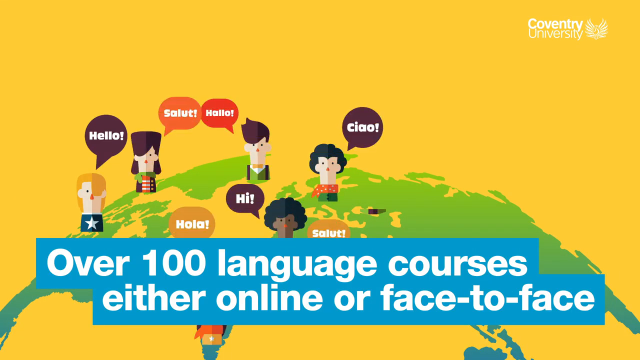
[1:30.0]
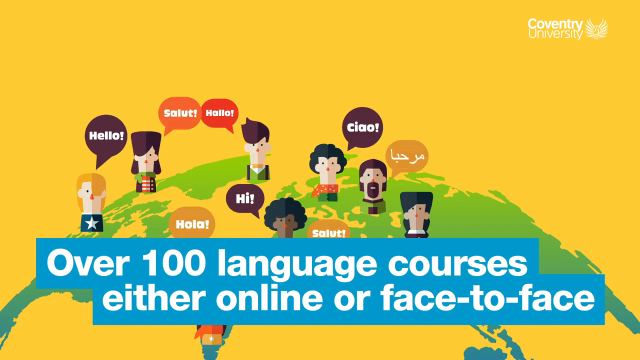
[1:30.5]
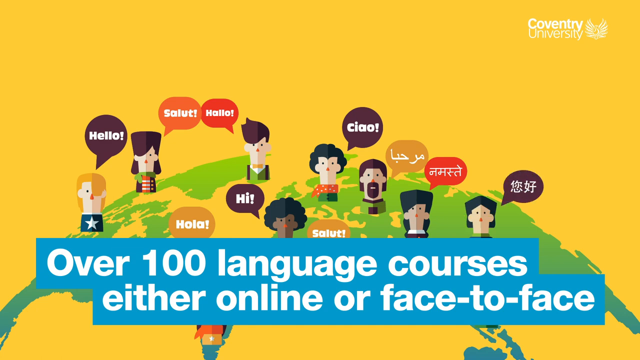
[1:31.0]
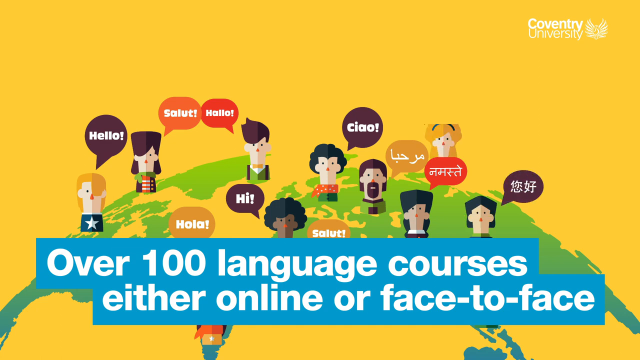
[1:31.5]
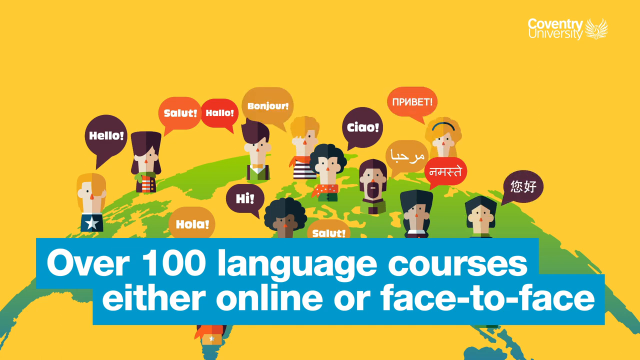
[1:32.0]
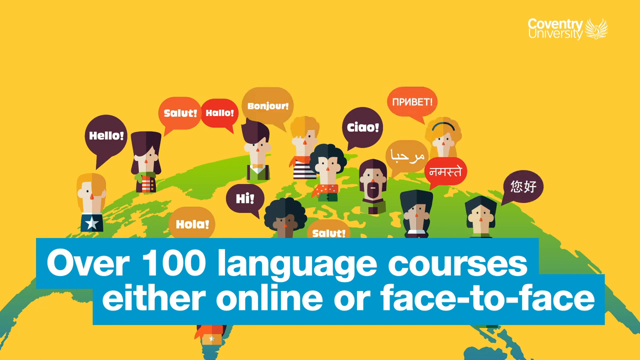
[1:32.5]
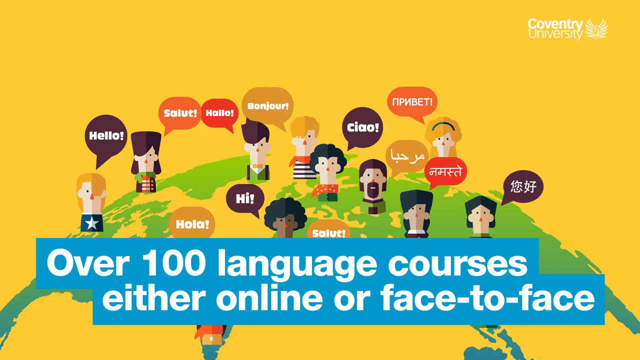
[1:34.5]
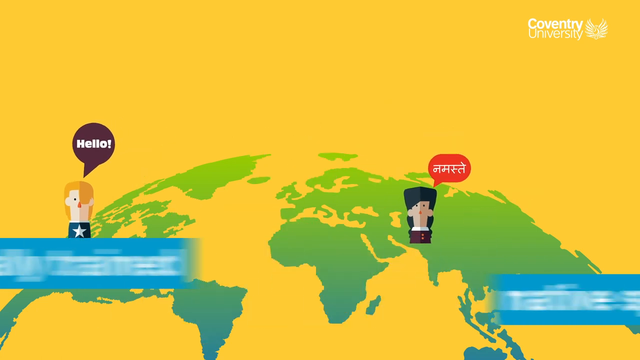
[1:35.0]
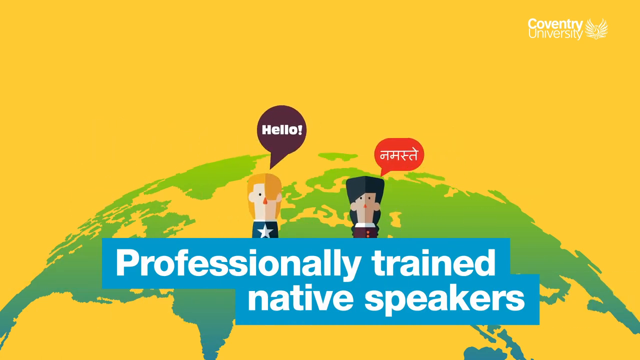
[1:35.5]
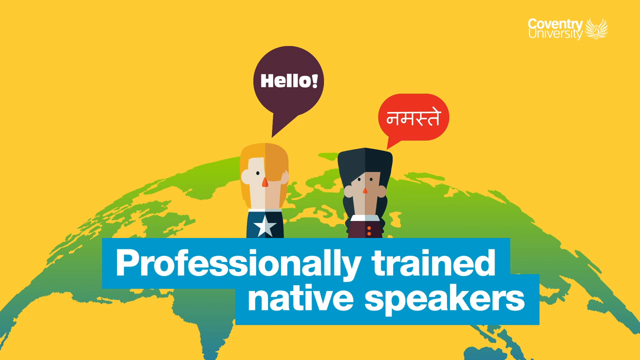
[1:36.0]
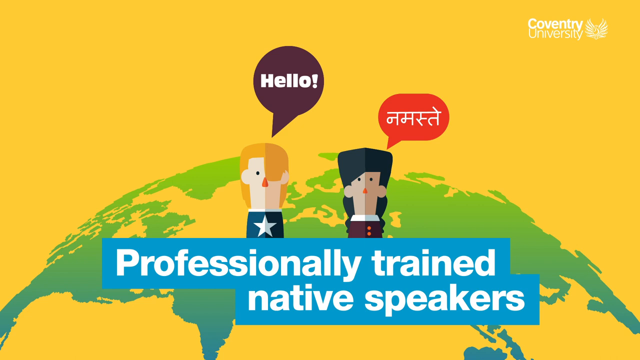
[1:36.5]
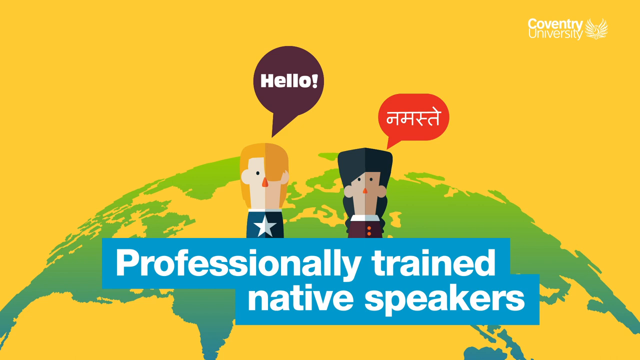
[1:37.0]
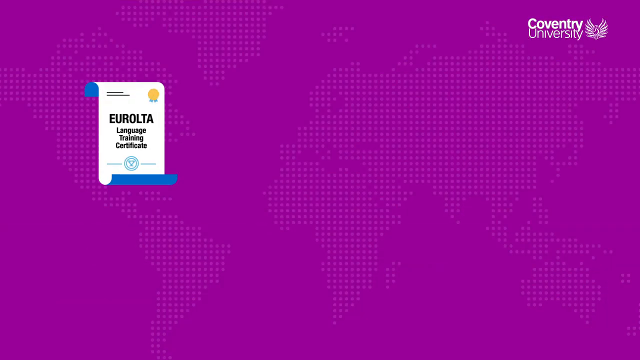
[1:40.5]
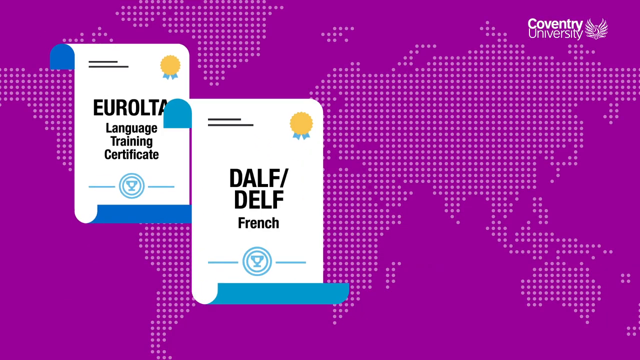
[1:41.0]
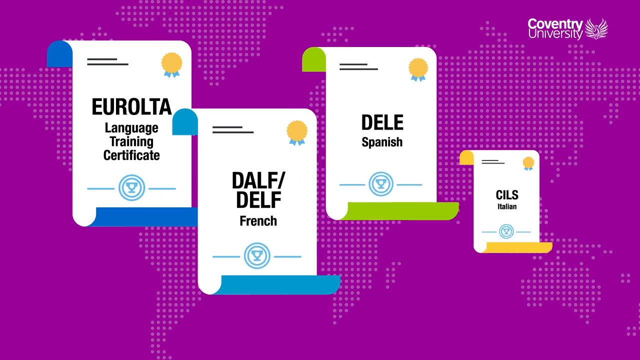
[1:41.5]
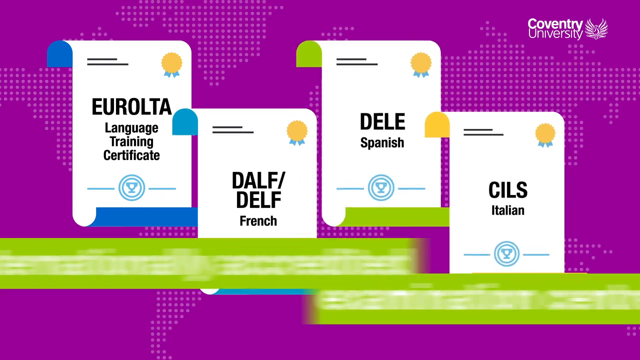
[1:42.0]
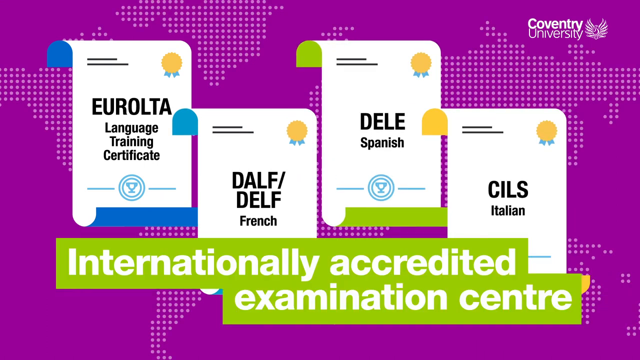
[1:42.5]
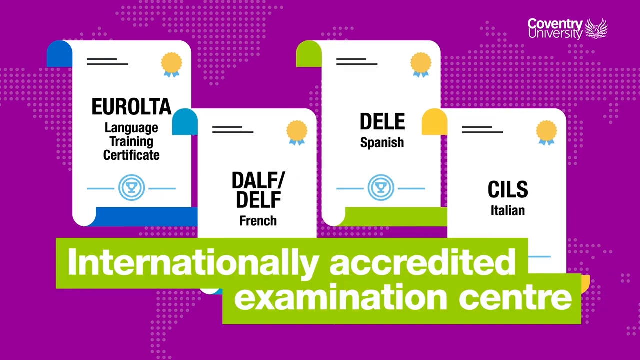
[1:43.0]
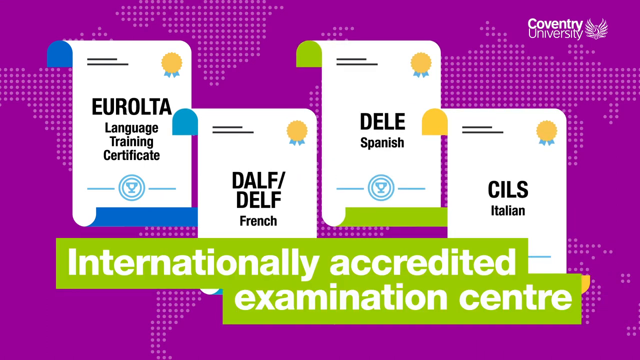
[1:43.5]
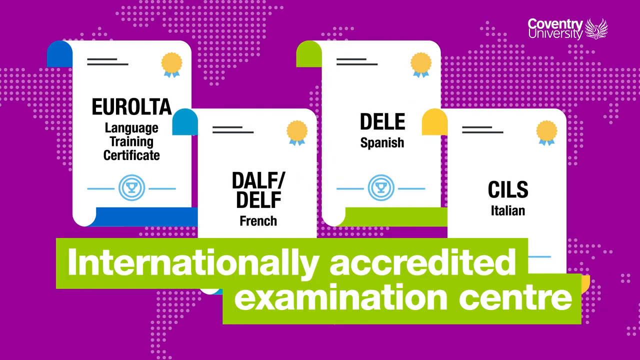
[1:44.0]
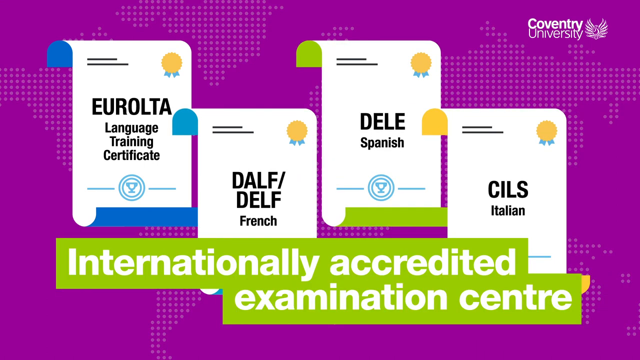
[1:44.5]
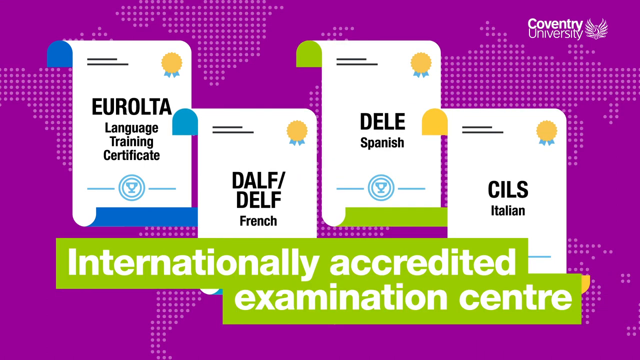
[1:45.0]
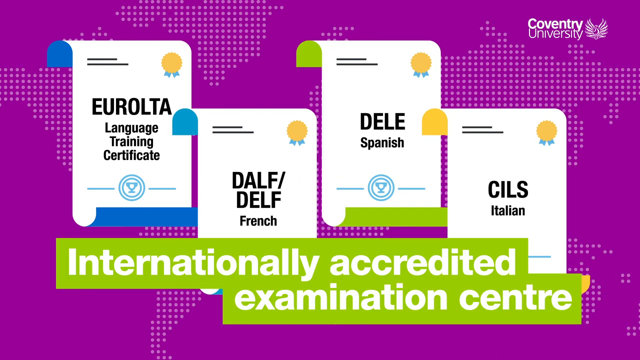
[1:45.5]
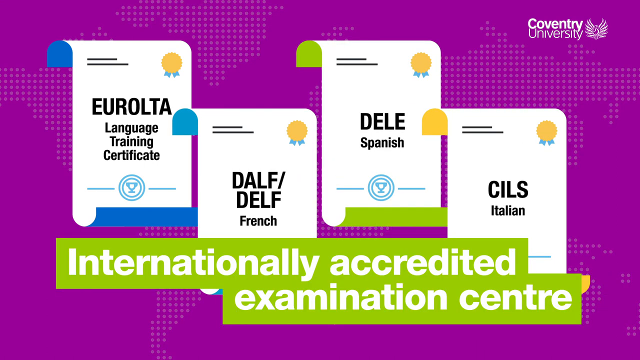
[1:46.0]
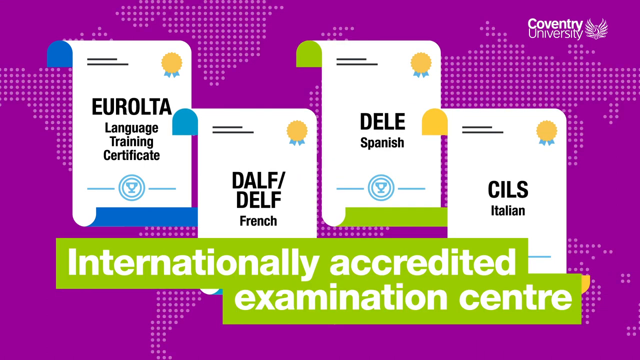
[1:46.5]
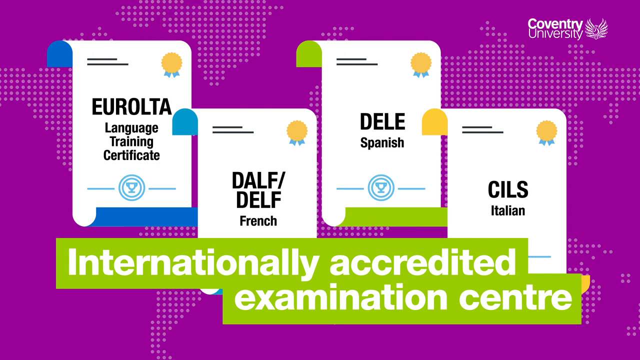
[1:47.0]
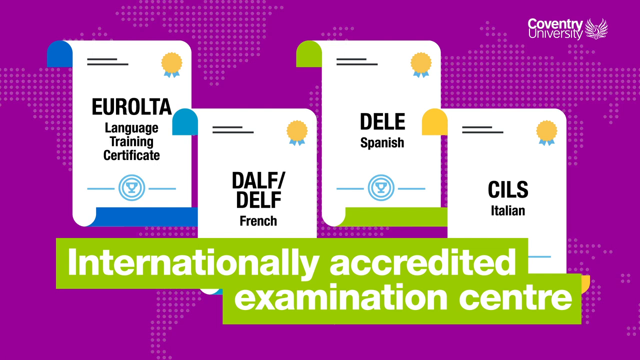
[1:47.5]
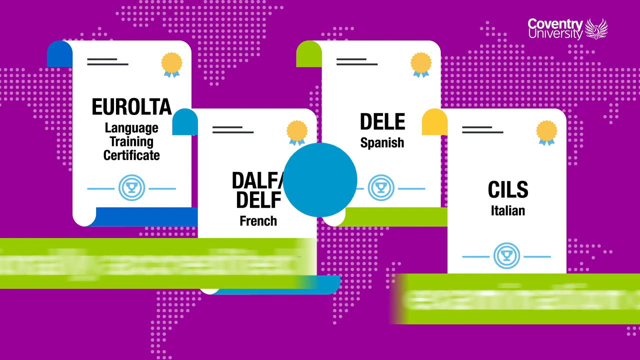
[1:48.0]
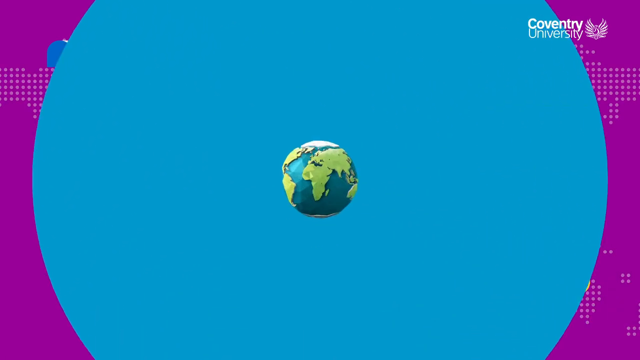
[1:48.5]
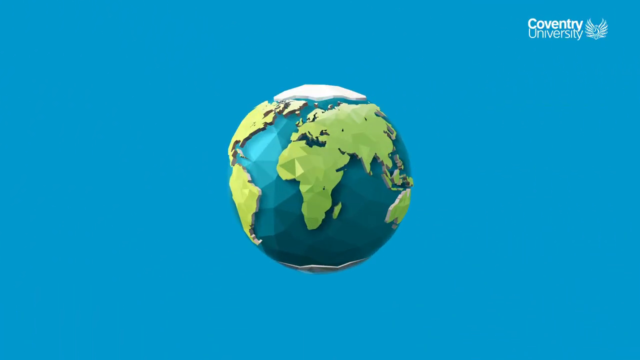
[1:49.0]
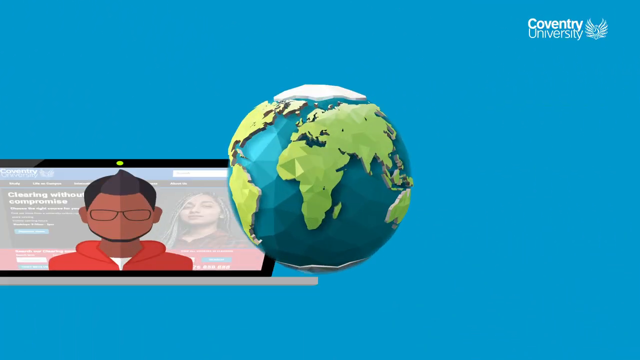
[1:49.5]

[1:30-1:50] A yellow screen shows, again, the globe, which is green, with multiple people standing on top of it, all saying hello in different languages. At the bottom of the screen, bold white lettering on a blue background reads "Over 100 language courses. Either online or face-to-face." The next page again shows the yellow screen with the green world and people standing on it, saying hello in two different languages; at the bottom, bold white lettering on a blue background reads "Professionally trained native speakers." The next page is a purple screen on which several pages pop up, with text including "Language Training Certificate" and "DELF, French," along with Spanish and Italian. At the bottom of the page, bold white lettering on a green background reads "Internationally accredited examination center." In the top right corner, white lettering reads "Coventry University." The next page has a blue background again, with a blue globe showing all of the continents in green.